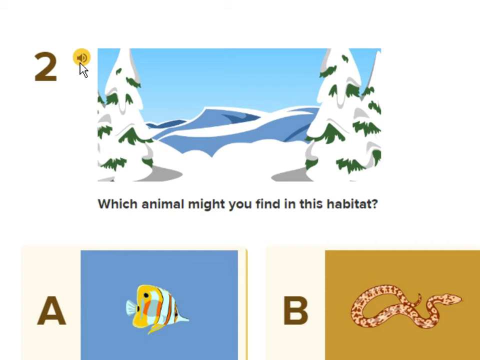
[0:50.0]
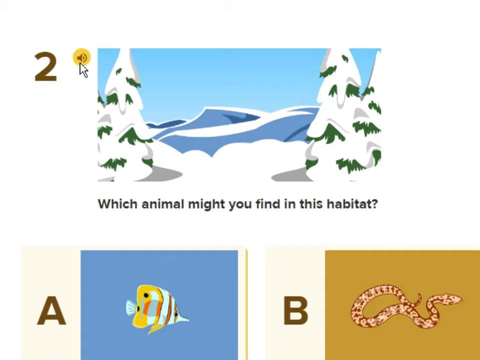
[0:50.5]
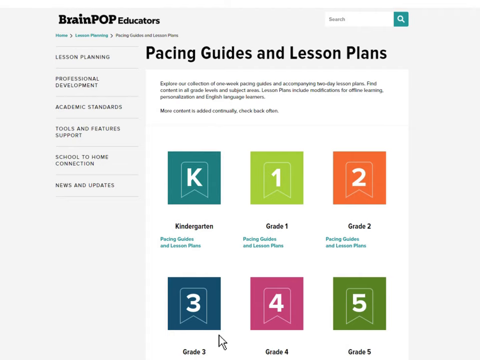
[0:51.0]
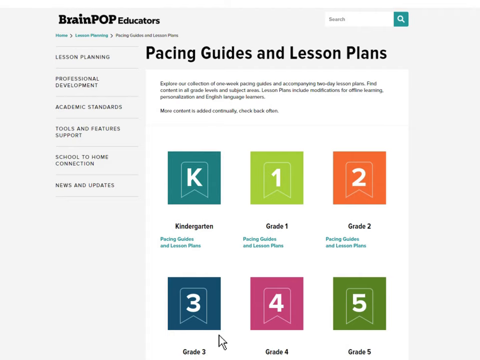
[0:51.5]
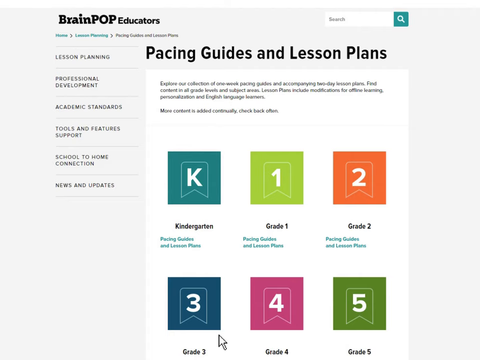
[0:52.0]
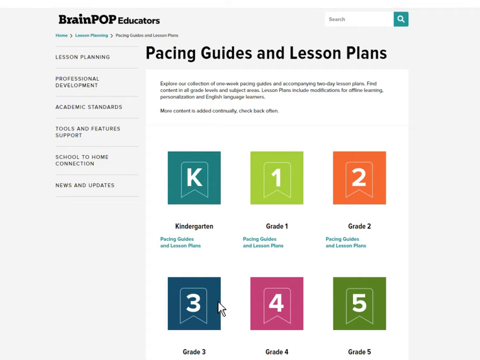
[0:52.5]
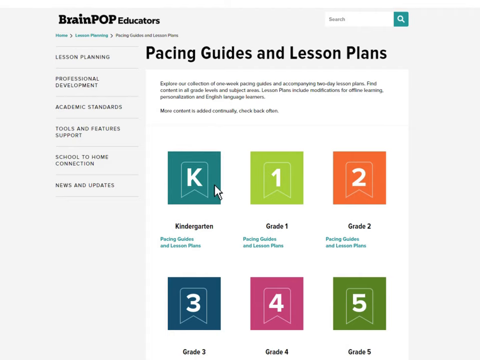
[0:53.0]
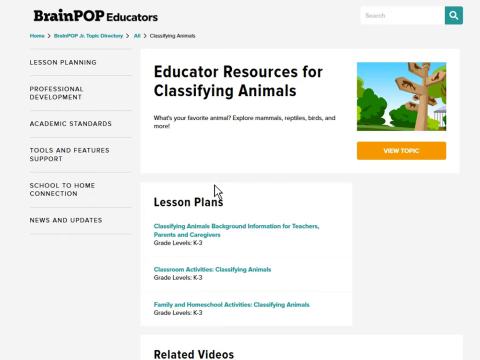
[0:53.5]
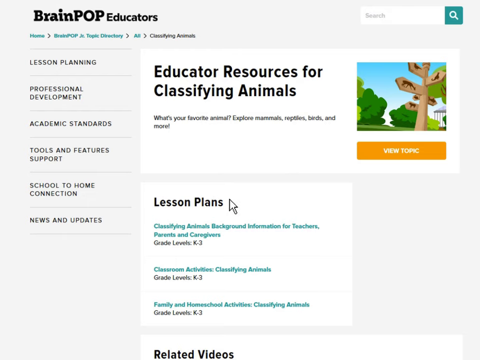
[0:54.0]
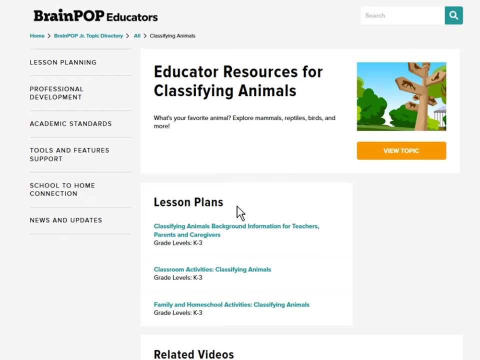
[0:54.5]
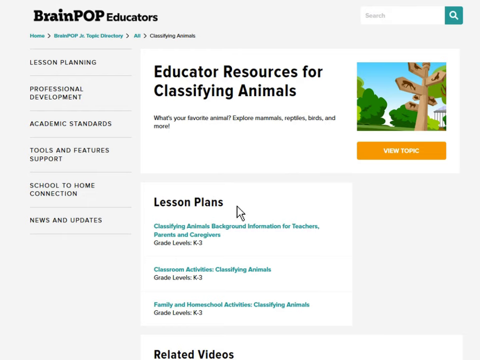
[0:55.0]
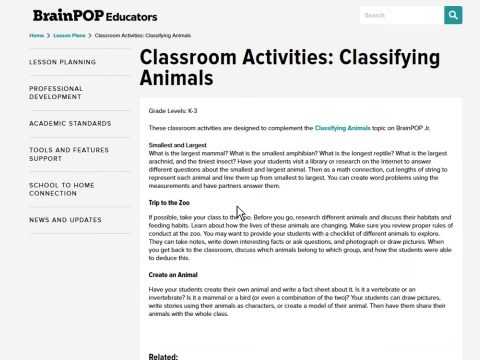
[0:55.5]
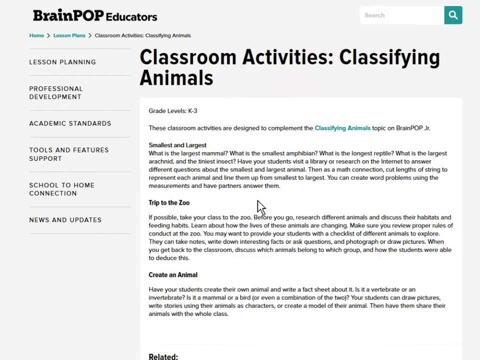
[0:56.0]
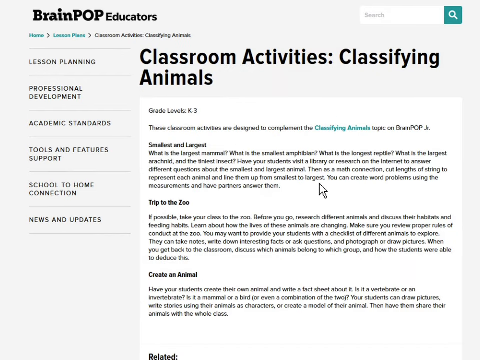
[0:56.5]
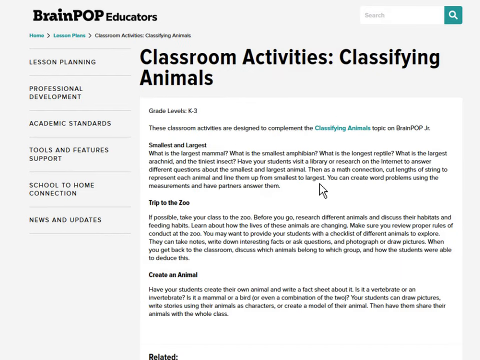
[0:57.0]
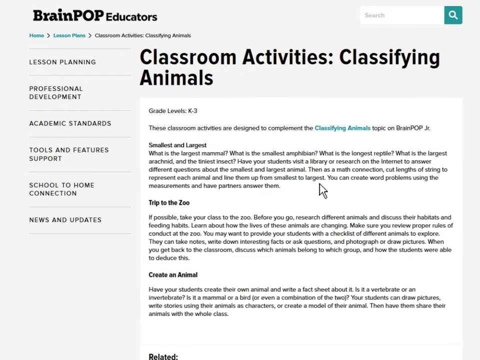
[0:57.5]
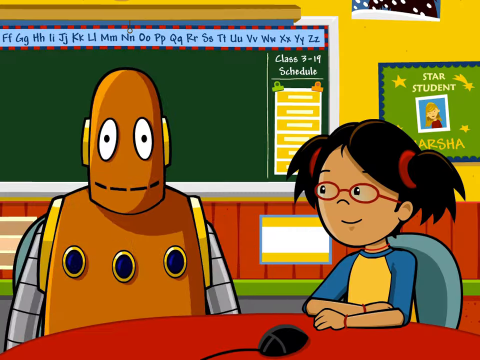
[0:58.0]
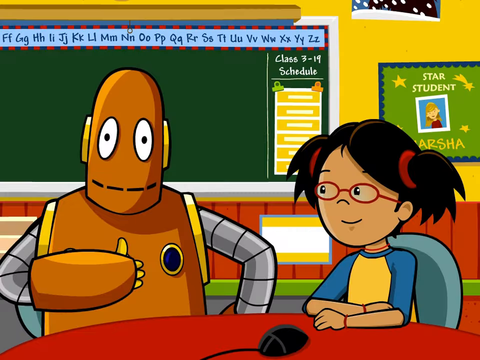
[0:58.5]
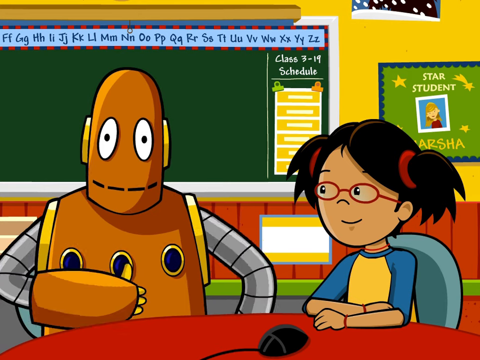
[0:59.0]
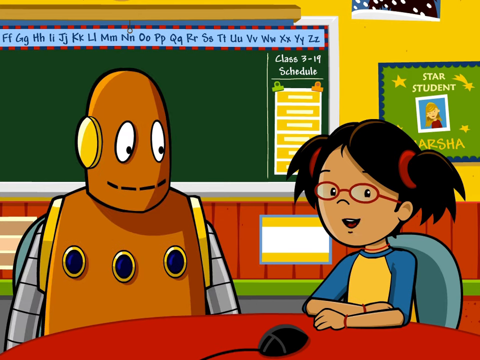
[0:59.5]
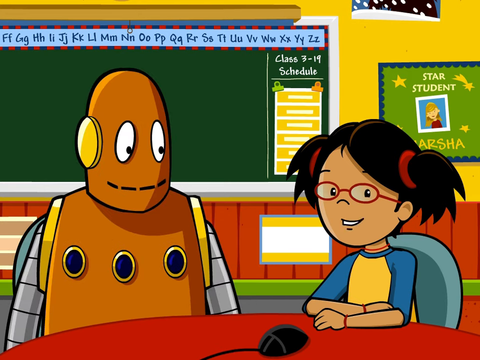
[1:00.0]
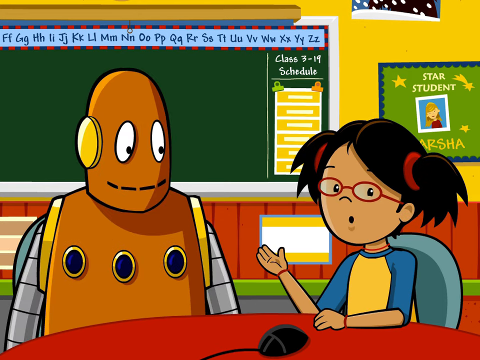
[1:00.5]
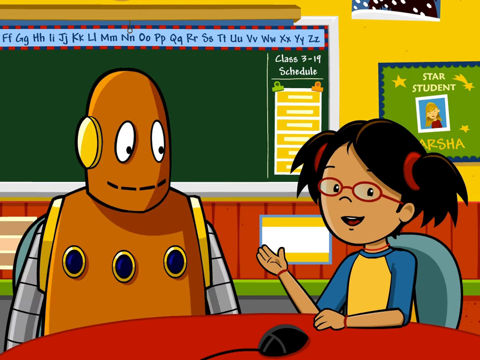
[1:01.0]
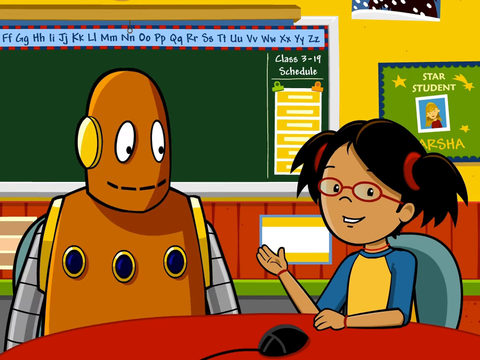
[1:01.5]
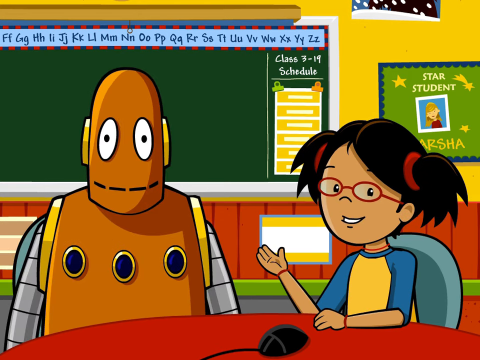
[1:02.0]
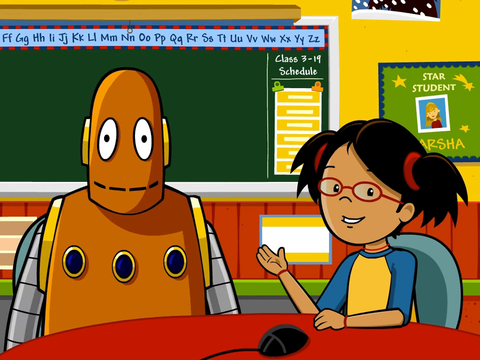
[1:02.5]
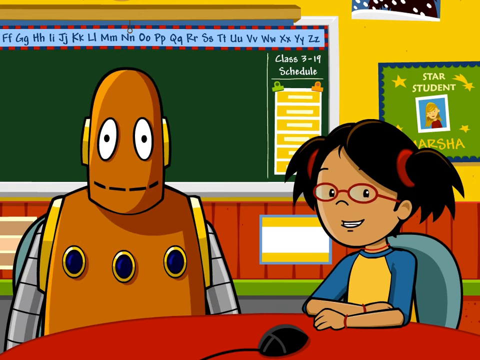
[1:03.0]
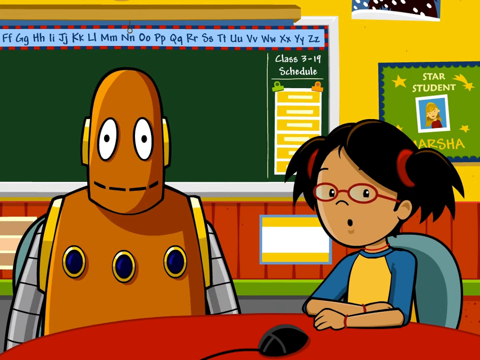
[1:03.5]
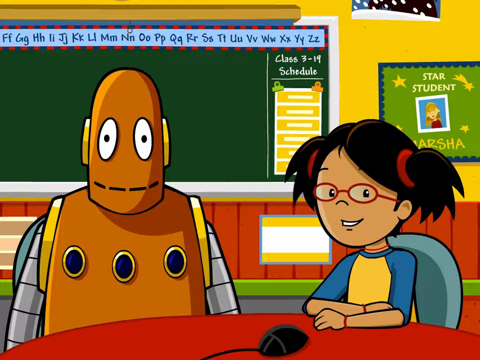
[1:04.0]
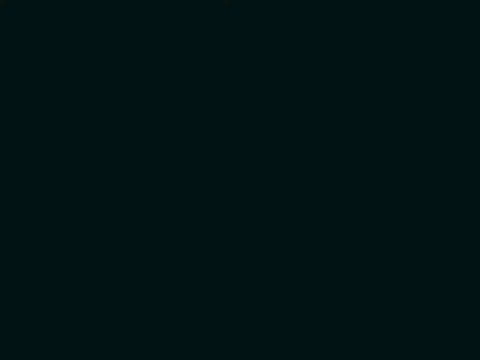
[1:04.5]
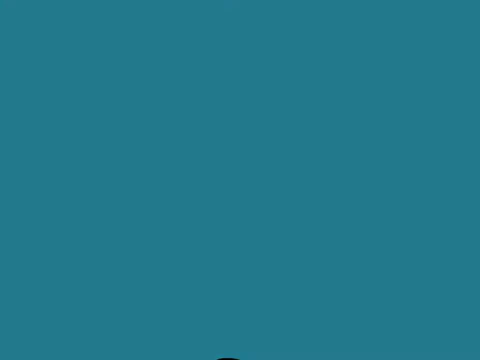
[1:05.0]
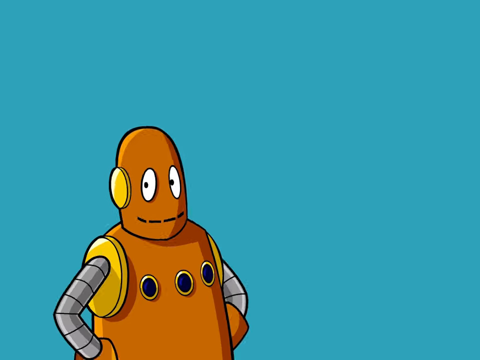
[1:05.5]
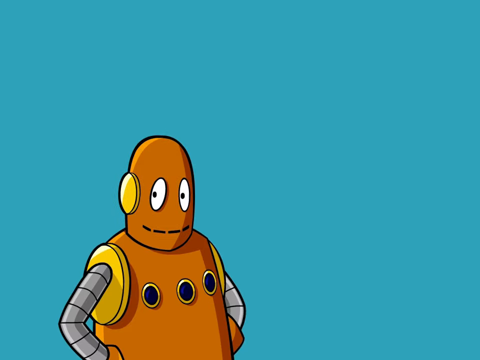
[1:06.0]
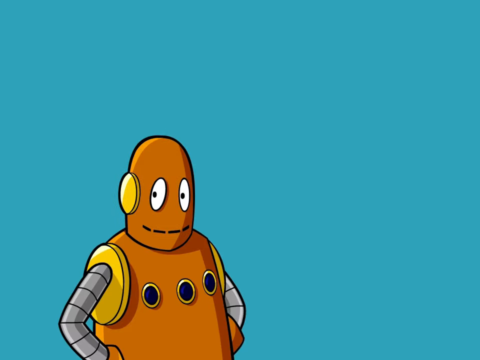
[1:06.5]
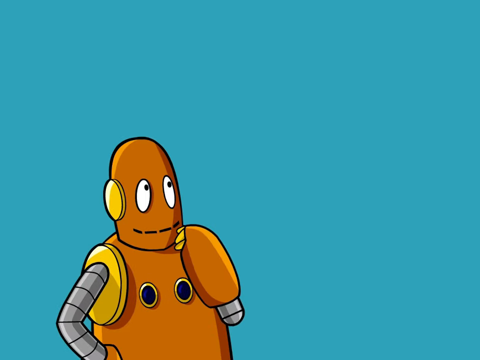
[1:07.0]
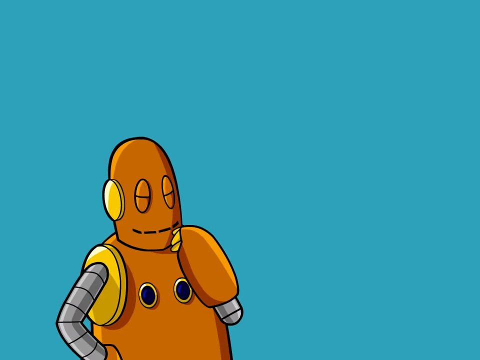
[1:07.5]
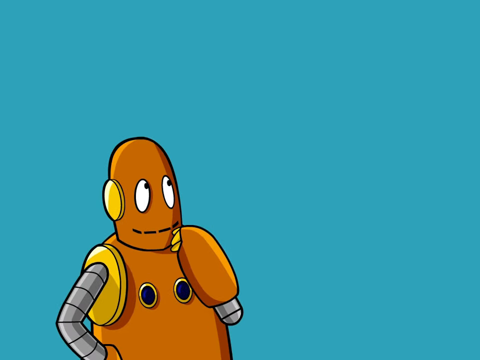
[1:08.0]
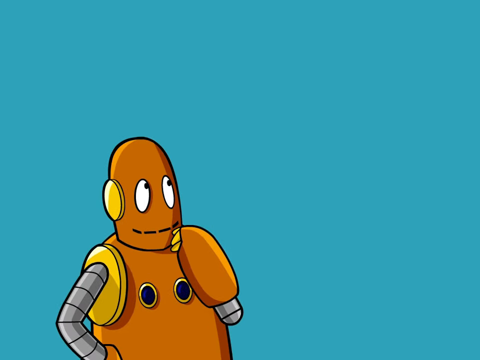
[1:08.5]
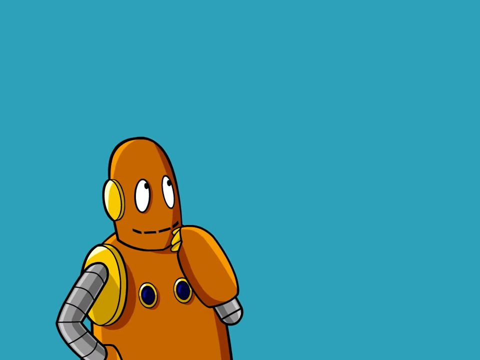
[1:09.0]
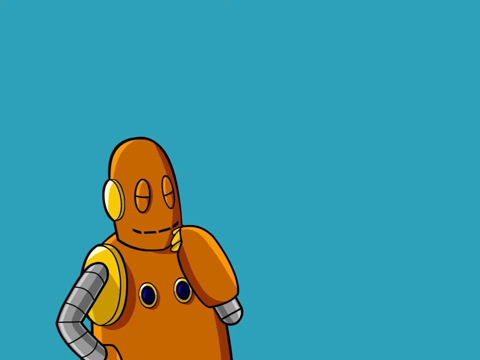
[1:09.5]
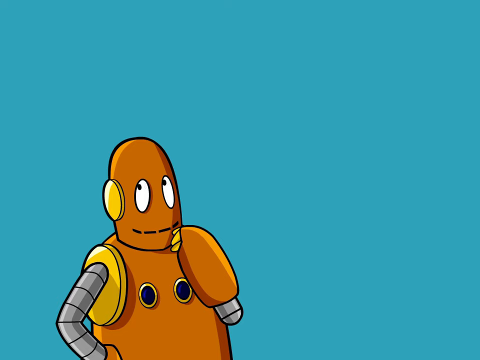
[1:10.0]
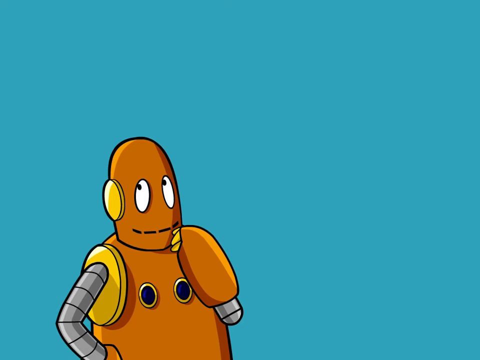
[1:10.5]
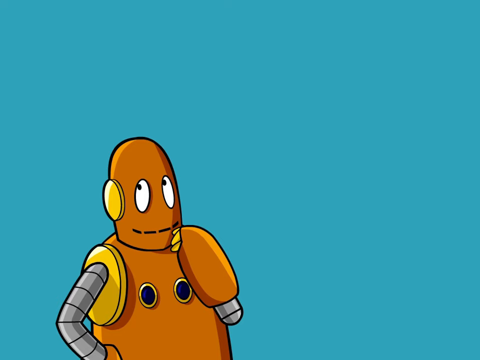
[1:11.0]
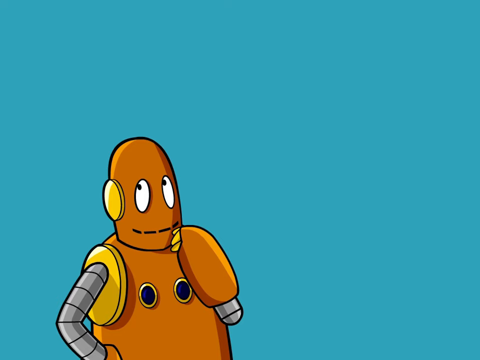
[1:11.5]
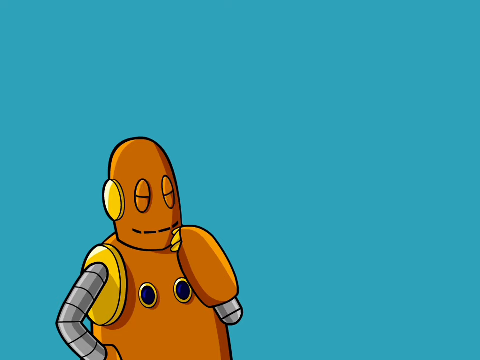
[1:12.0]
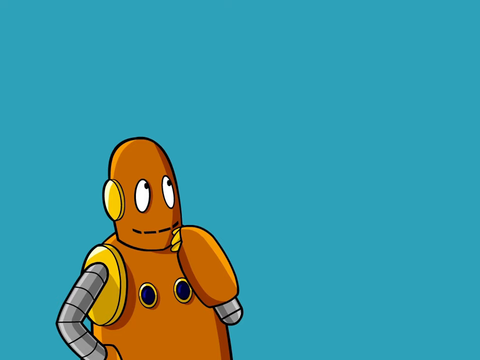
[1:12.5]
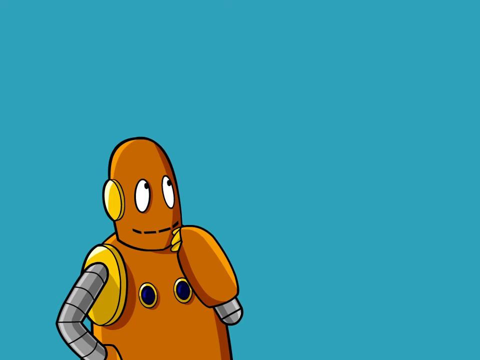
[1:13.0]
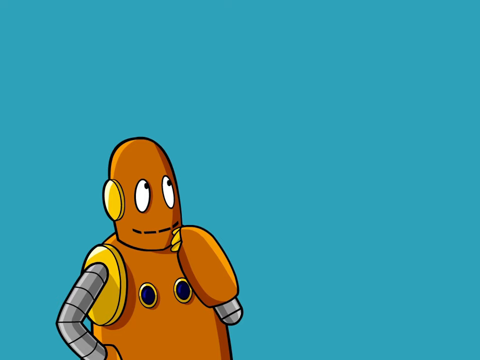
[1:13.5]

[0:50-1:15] The question "which animal might you find in this habitat?" is on screen, with a circle that looks like an option to have it read aloud, and answers to choose from. Then come pacing guides and lesson plans, including lesson plans for every grade: kindergarten, first, second, third, fourth and fifth, along with professional development, academic standards, tools and features, and home connects. Educator resources for classifying animals and lesson plans appear, as well as classroom activities for classifying animals and lesson plans. The robot looks very happy and is smiling as he looks at the little girl, who is talking and smiling. Then the robot pops up alone against a blue background.